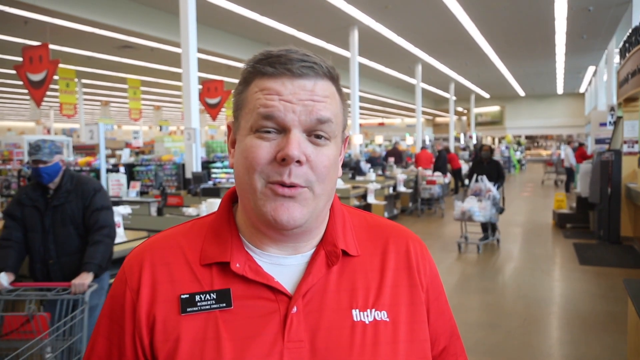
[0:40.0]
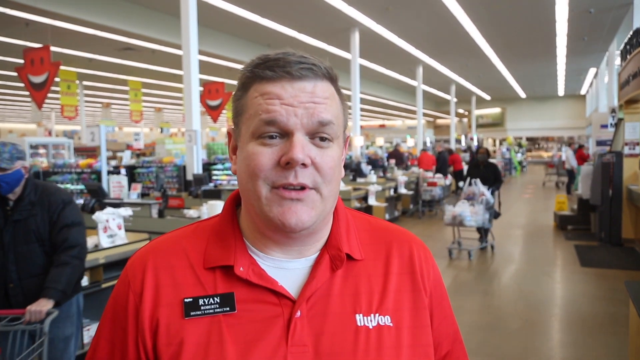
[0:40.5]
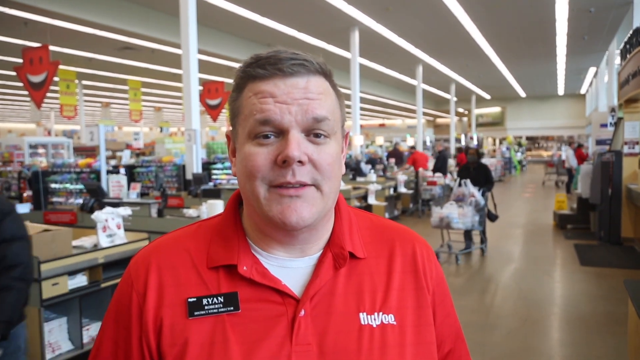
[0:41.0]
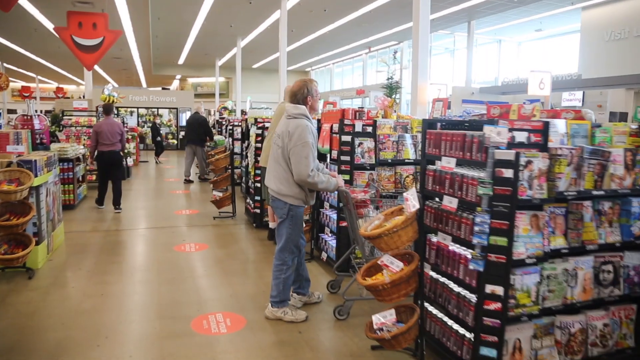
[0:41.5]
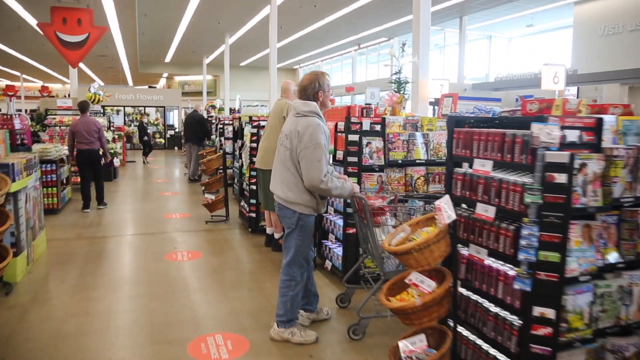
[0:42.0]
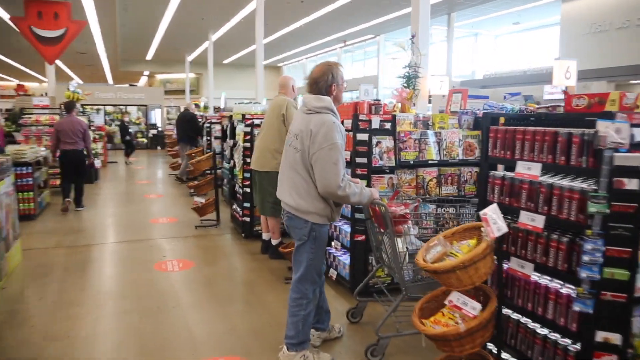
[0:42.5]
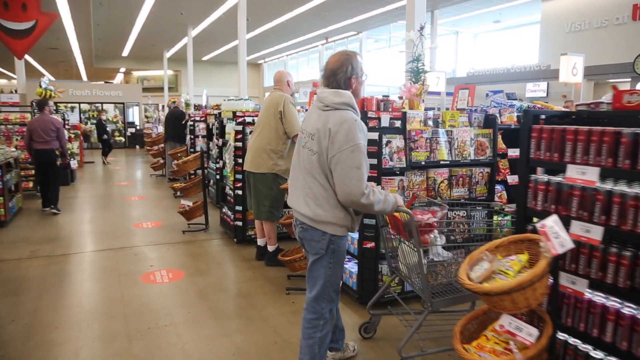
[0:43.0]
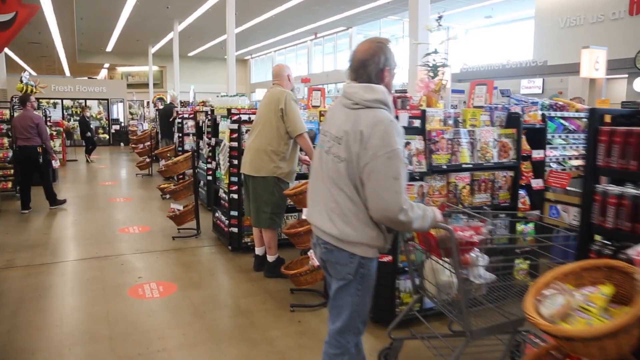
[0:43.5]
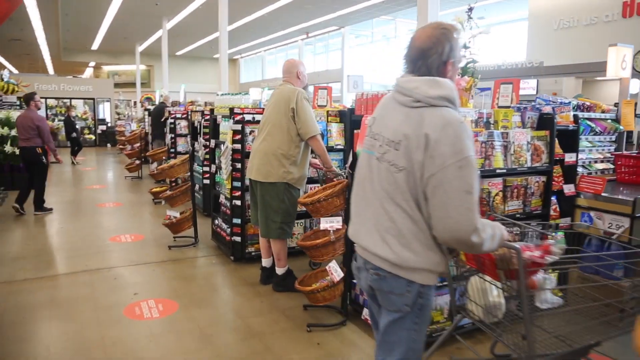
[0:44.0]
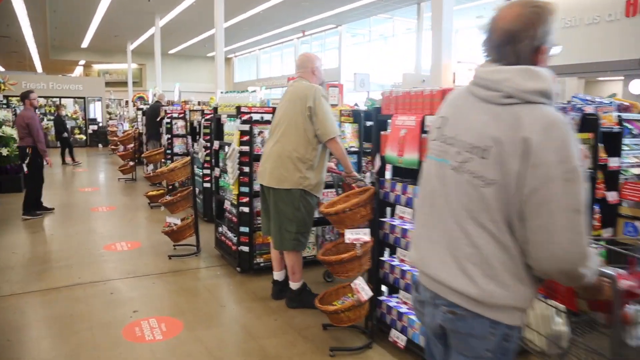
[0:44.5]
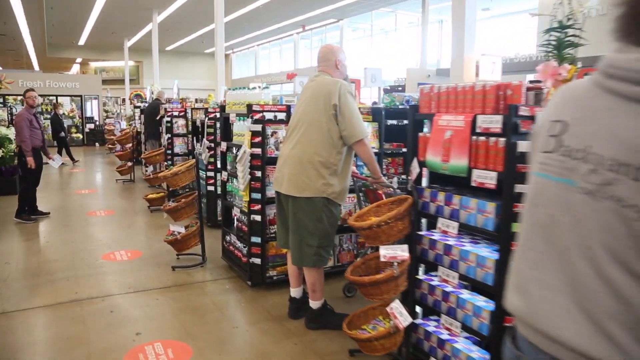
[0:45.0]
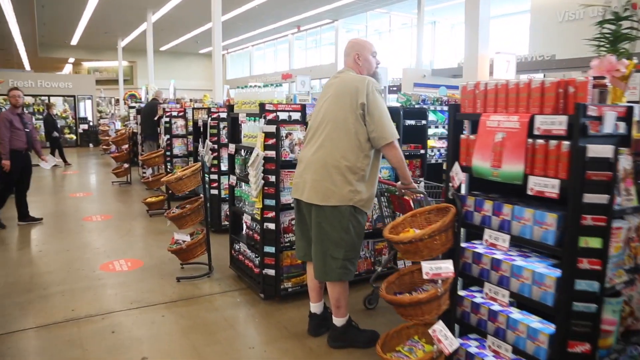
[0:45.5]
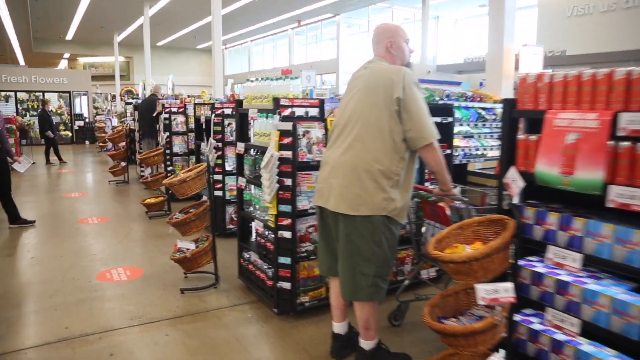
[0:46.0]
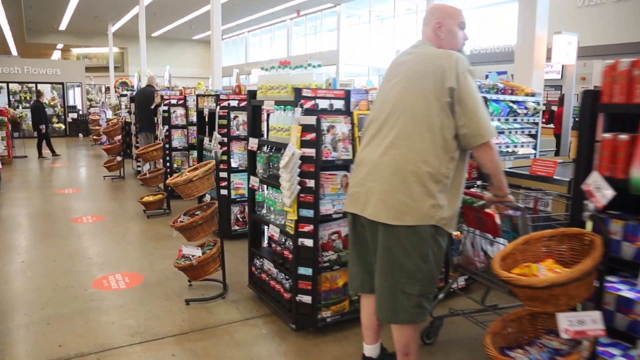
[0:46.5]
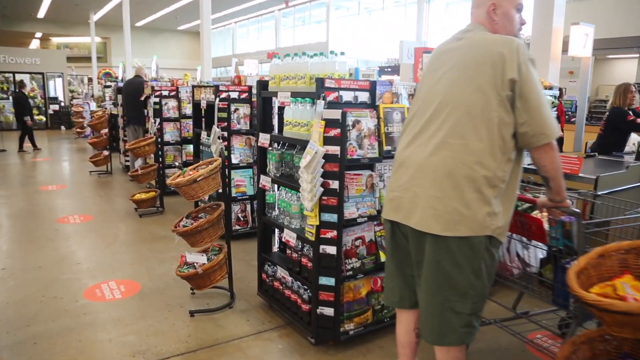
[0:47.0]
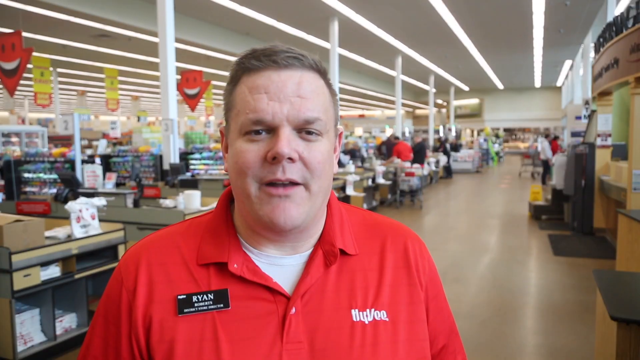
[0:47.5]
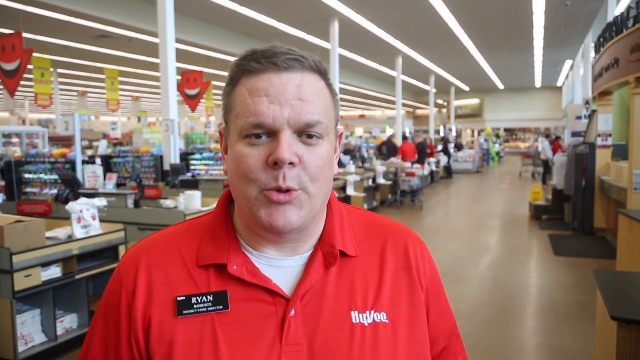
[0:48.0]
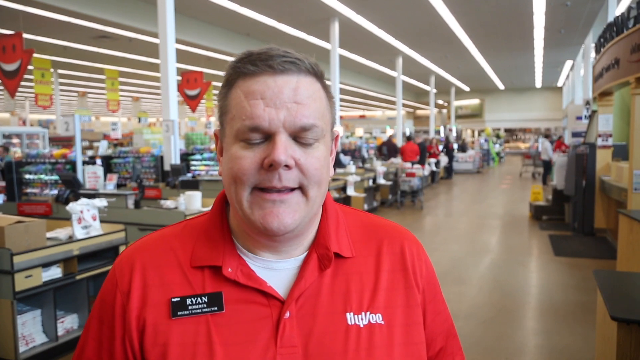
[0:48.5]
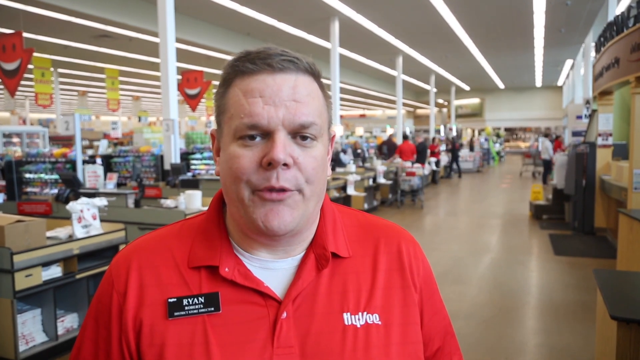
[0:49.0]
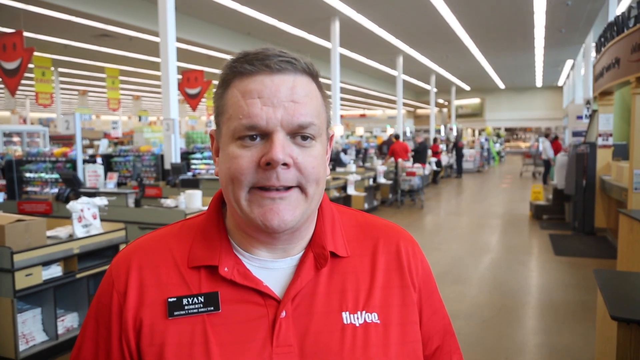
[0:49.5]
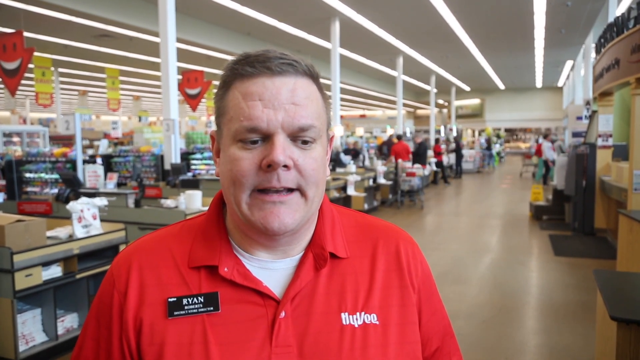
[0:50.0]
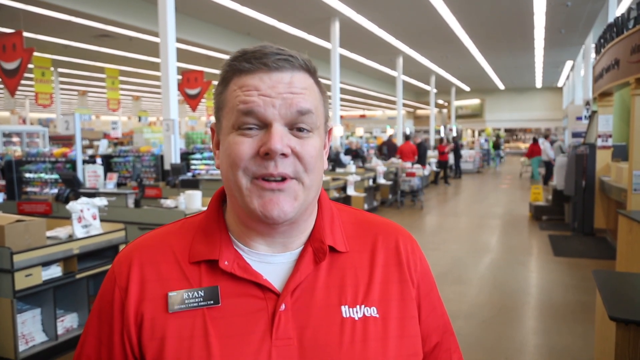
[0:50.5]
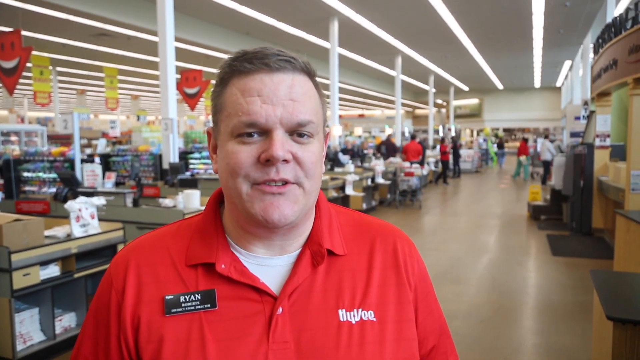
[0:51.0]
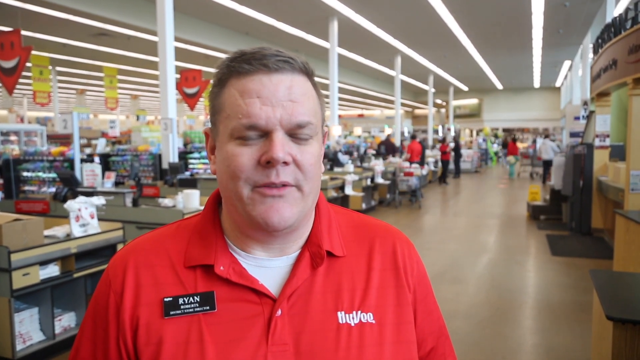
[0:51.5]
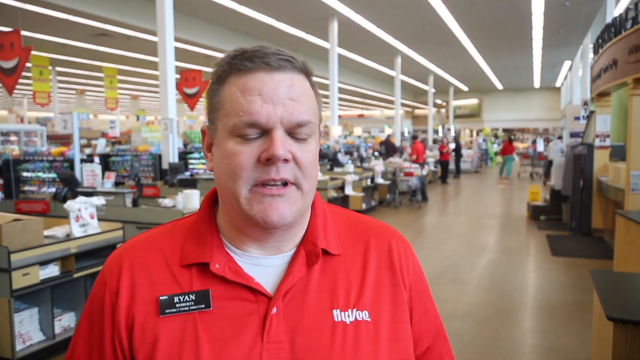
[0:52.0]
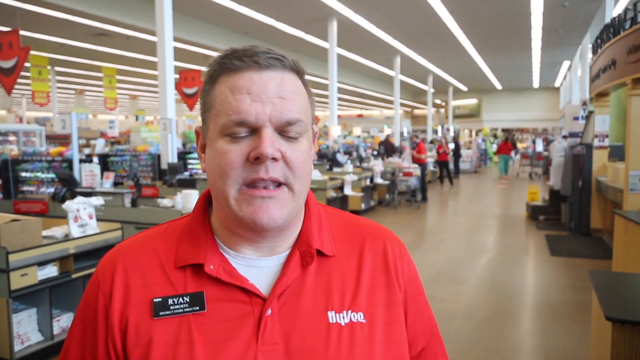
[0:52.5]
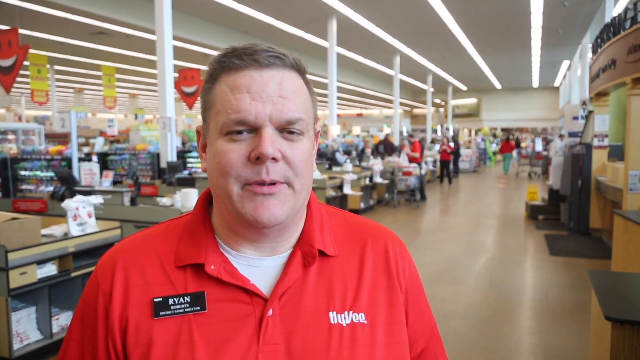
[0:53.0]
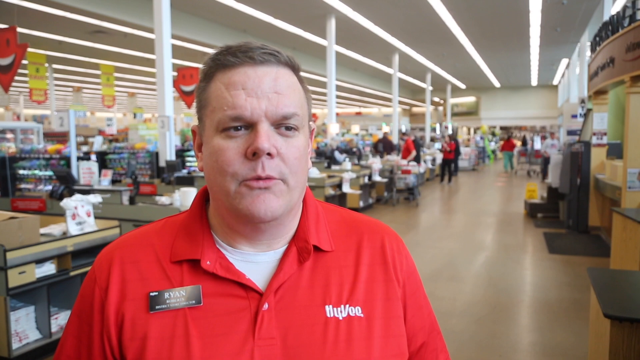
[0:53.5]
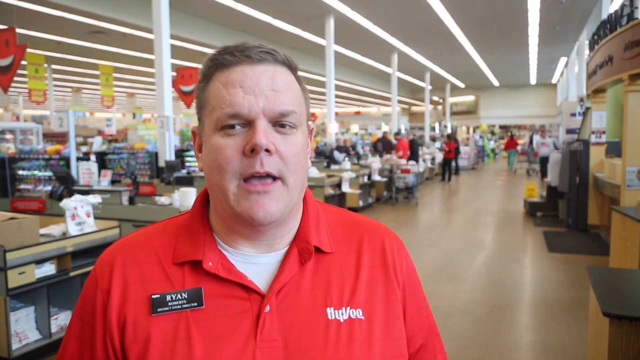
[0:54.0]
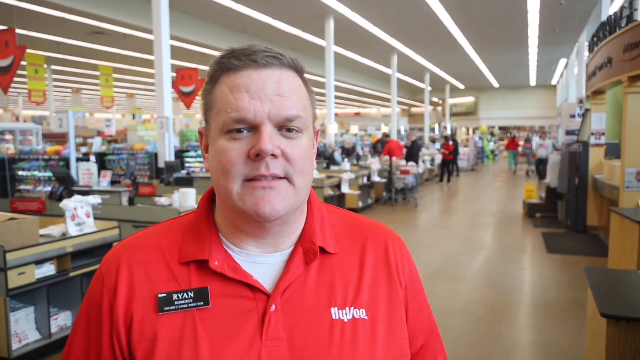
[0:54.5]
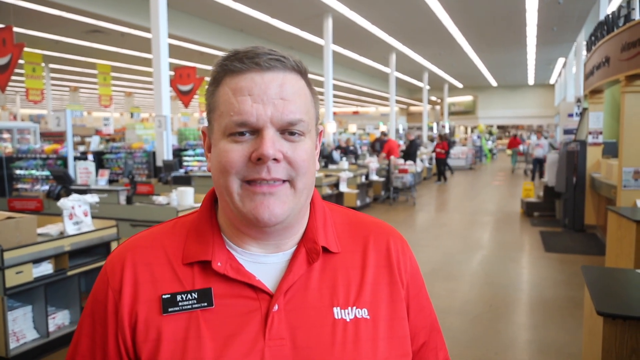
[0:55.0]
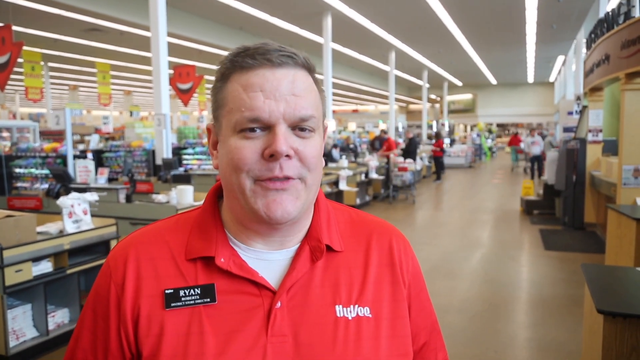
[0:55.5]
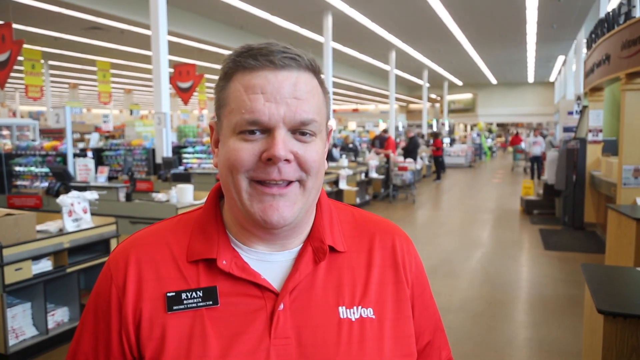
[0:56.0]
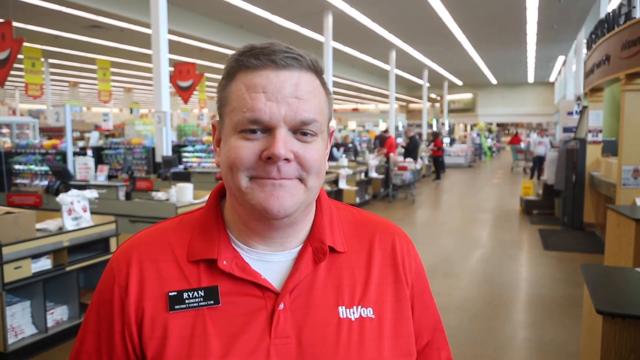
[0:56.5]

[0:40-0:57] Ryan talks for a little while as the video shows people standing in line waiting to get their grocery items checked out. The shot returns to Ryan talking, interview-style, from the same angle and point of view in front of all the checkout lines. As the video pans over a large number of checkout lines, at least five people are present: three in the checkout line, one who appears to be a store employee kind of walking behind them, and a woman at the far end of the screen who looks like she is just standing there waiting to move forward into the line. On the floor there appear to be some kind of red circles, probably markers to stand six feet apart or to wait there before proceeding in line.